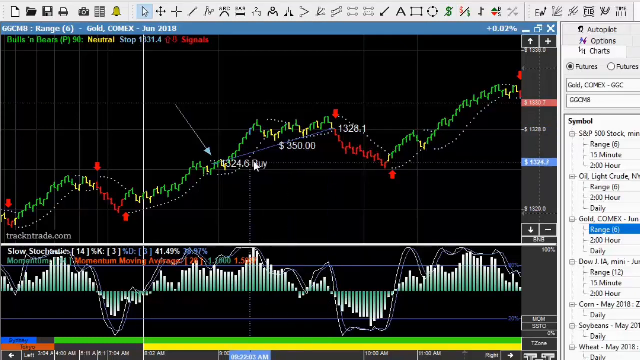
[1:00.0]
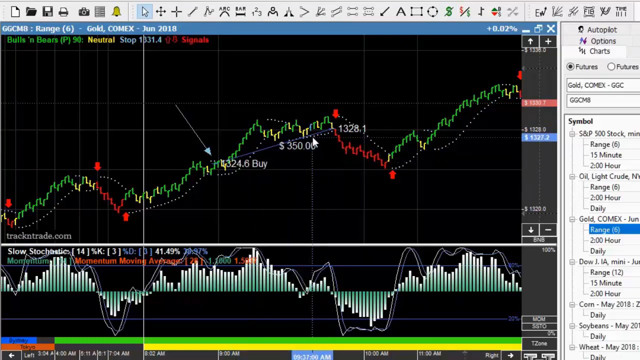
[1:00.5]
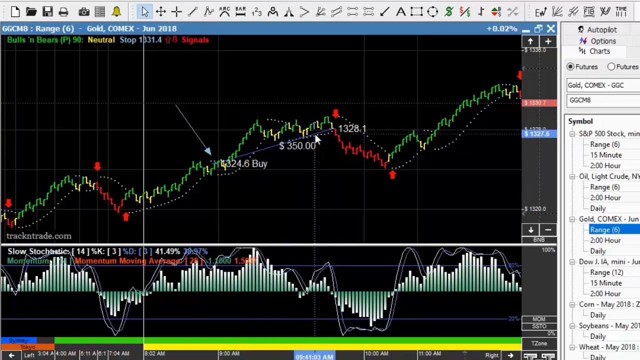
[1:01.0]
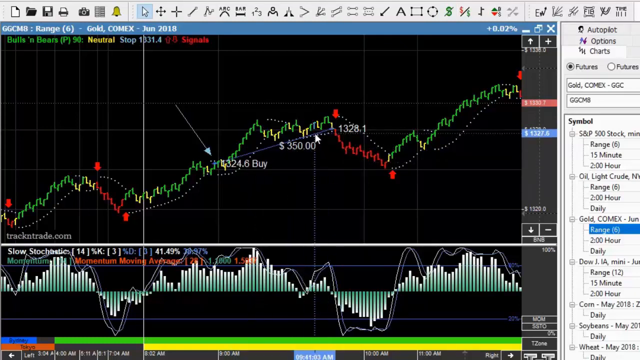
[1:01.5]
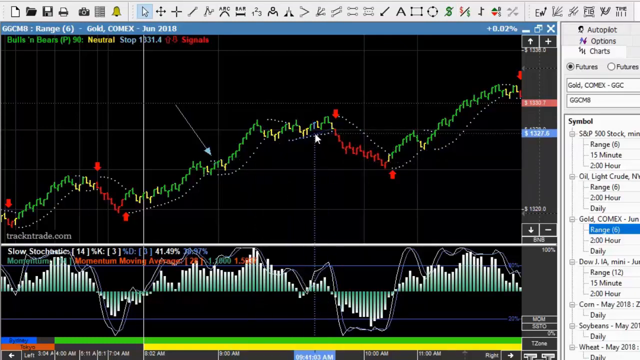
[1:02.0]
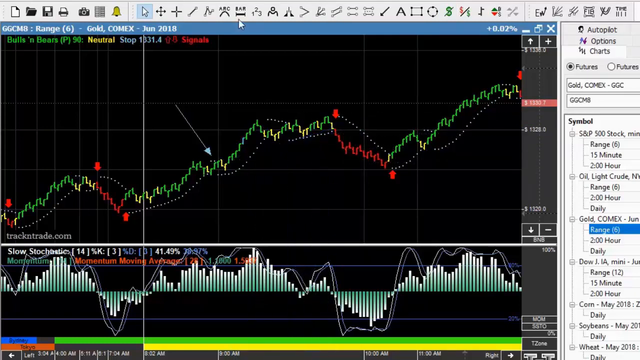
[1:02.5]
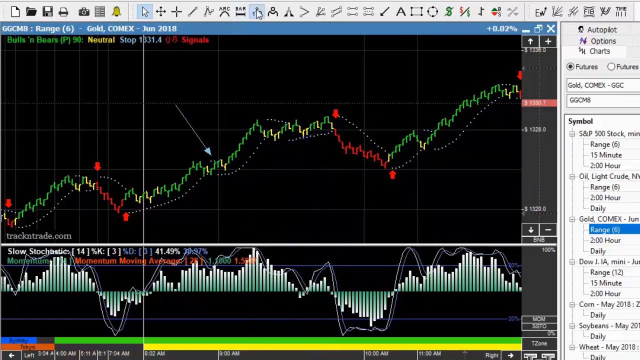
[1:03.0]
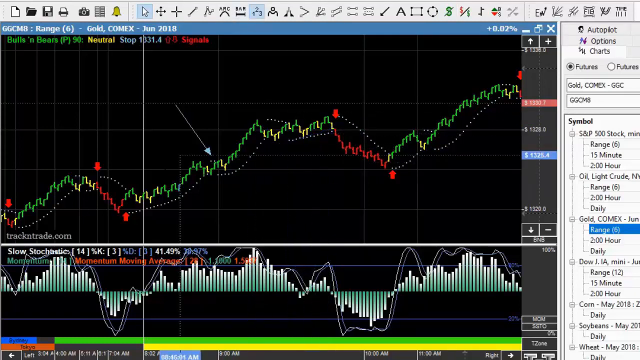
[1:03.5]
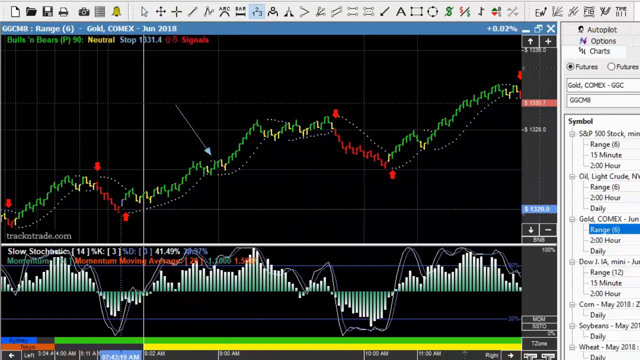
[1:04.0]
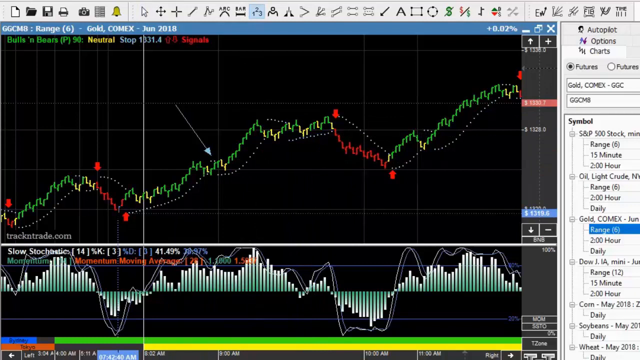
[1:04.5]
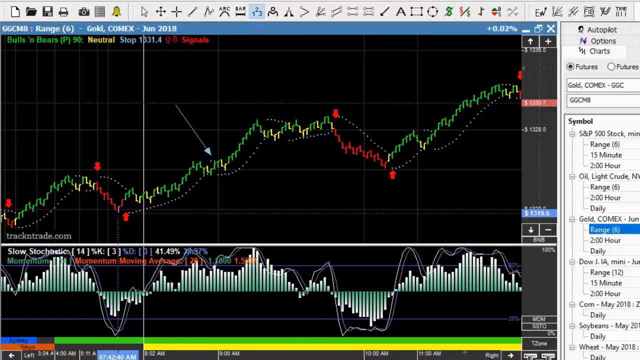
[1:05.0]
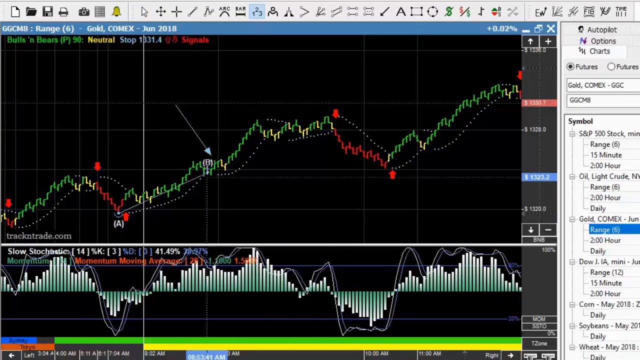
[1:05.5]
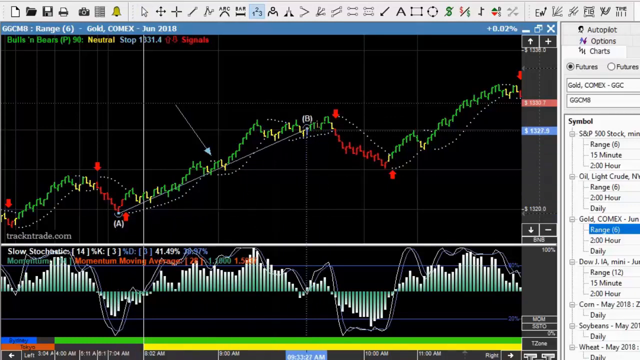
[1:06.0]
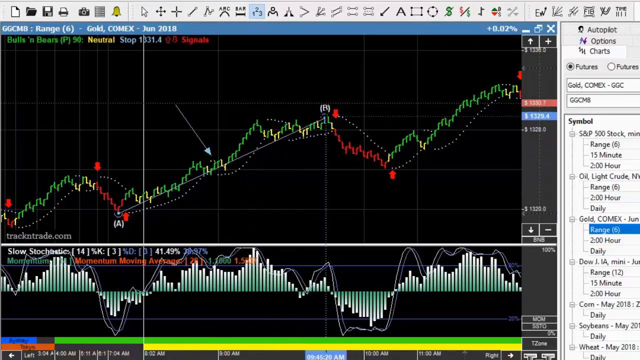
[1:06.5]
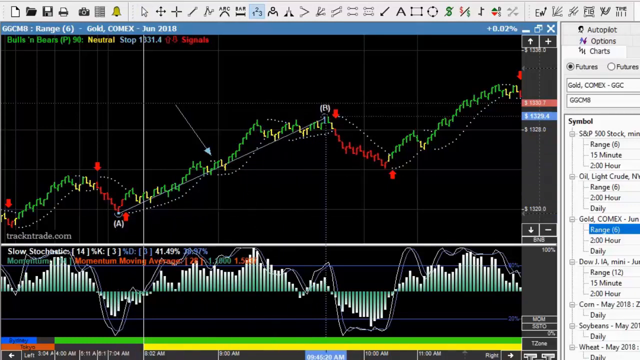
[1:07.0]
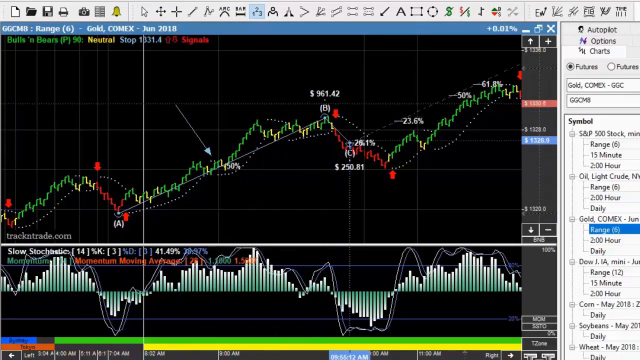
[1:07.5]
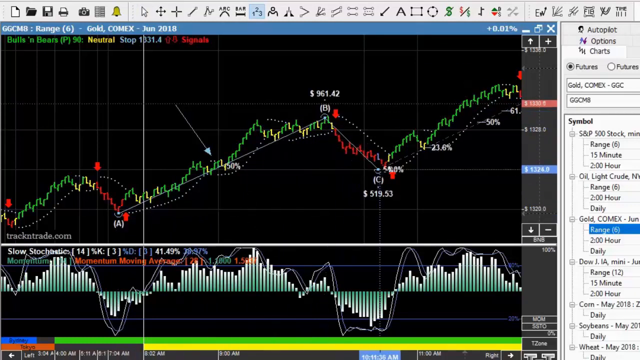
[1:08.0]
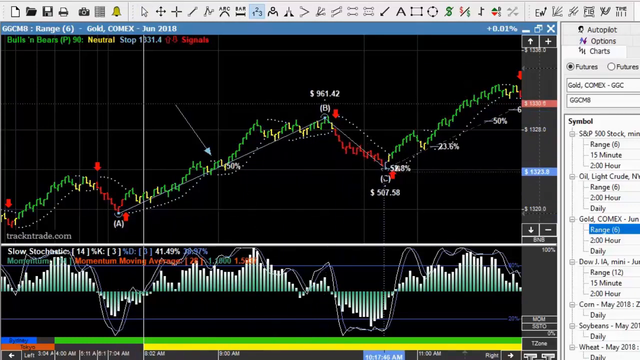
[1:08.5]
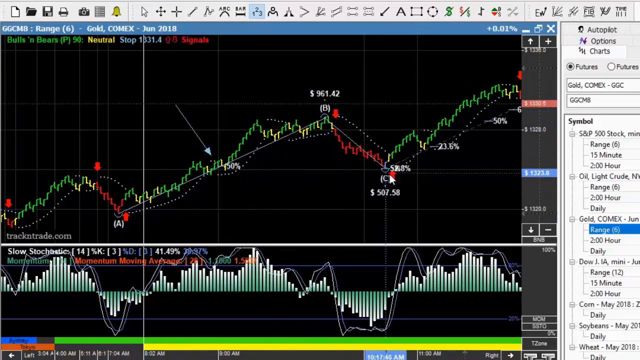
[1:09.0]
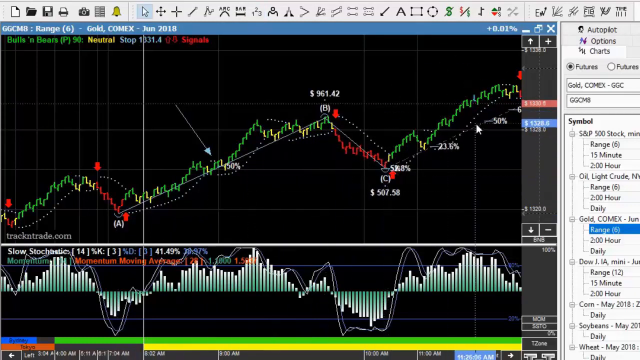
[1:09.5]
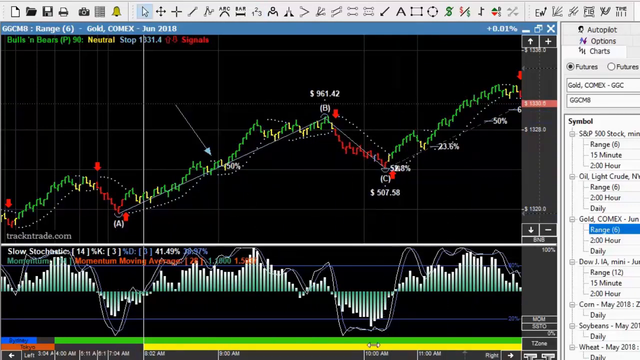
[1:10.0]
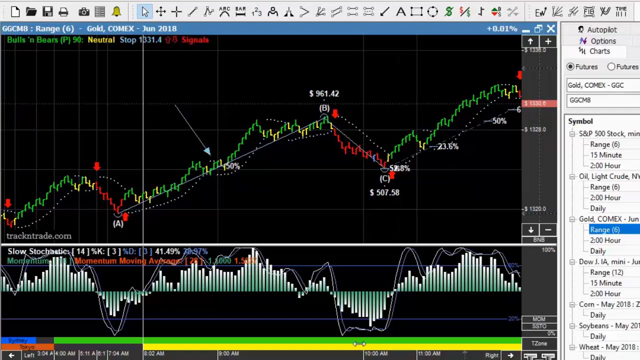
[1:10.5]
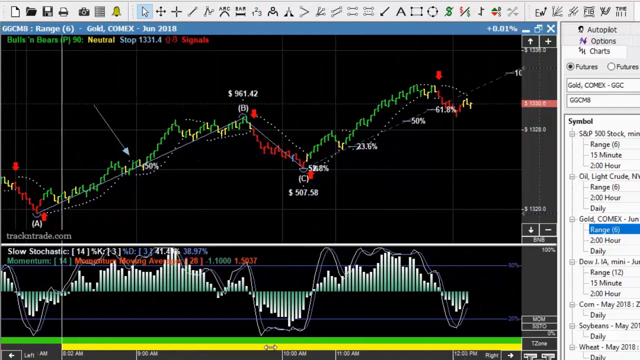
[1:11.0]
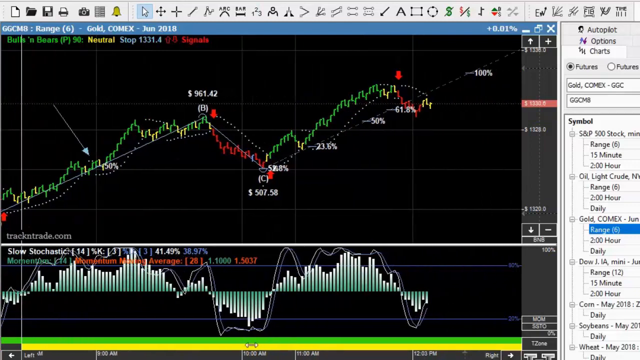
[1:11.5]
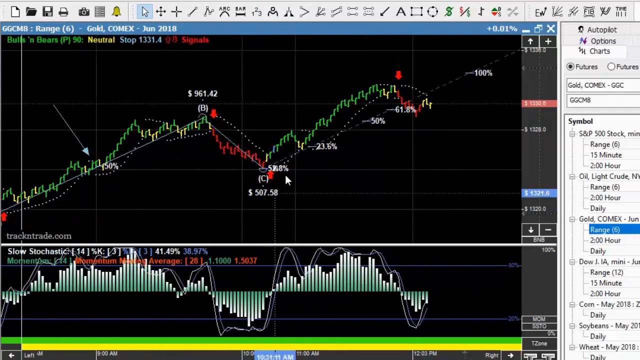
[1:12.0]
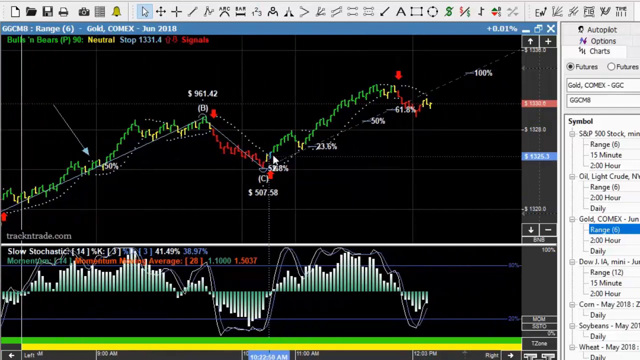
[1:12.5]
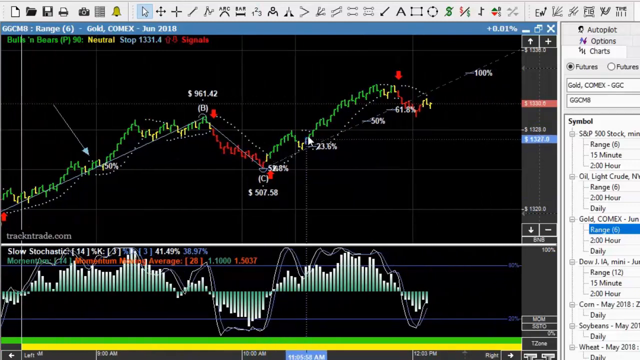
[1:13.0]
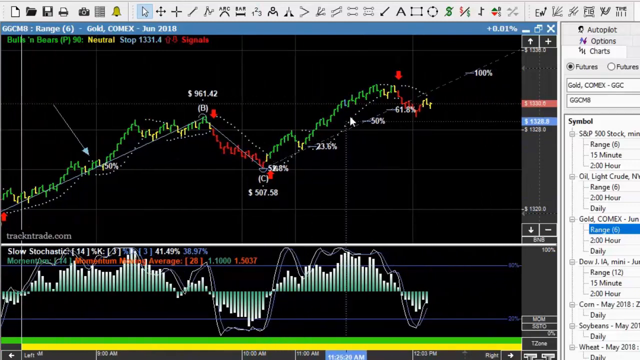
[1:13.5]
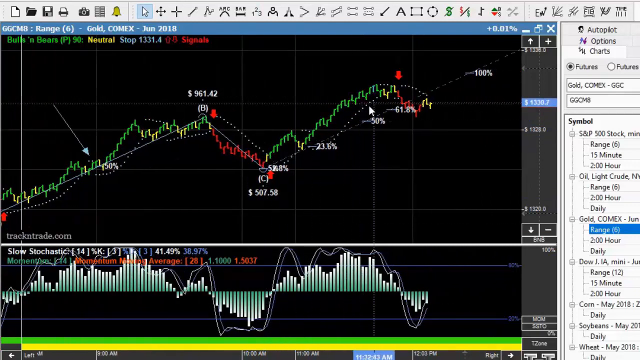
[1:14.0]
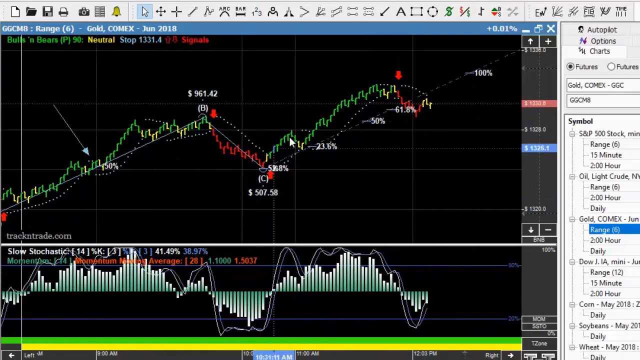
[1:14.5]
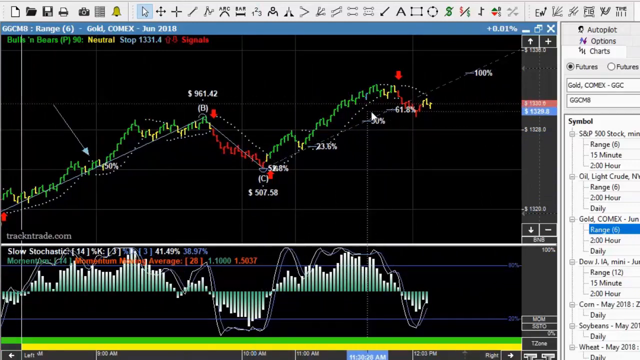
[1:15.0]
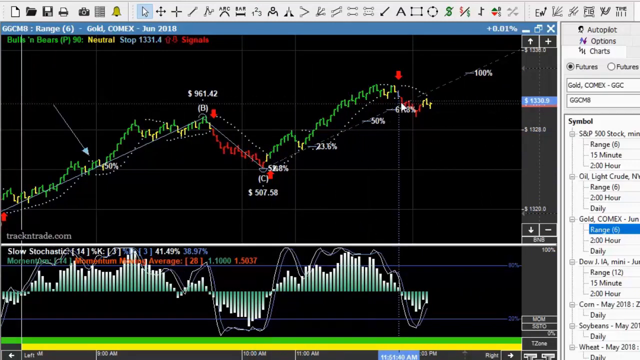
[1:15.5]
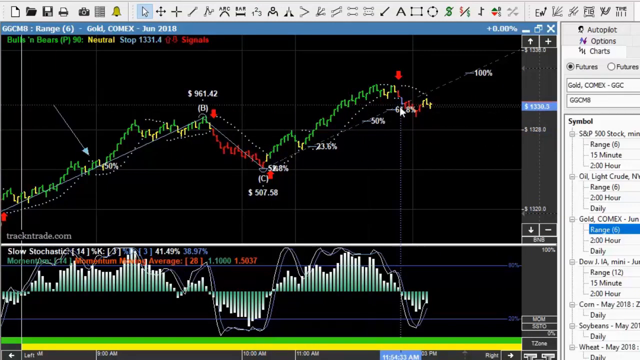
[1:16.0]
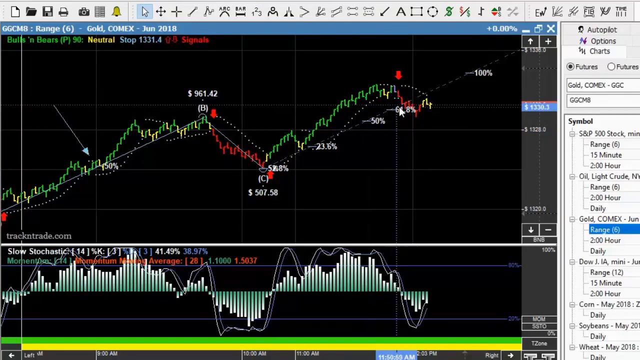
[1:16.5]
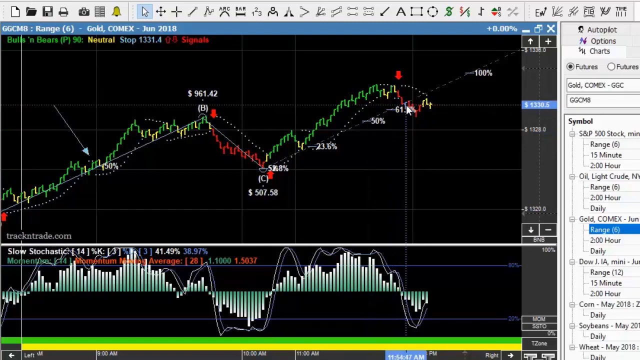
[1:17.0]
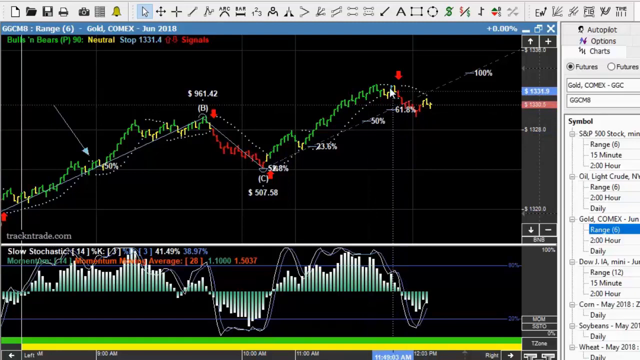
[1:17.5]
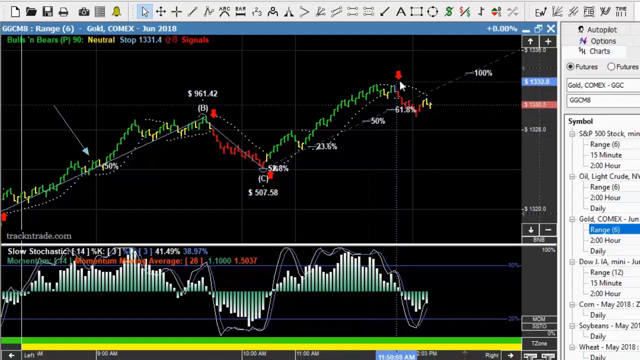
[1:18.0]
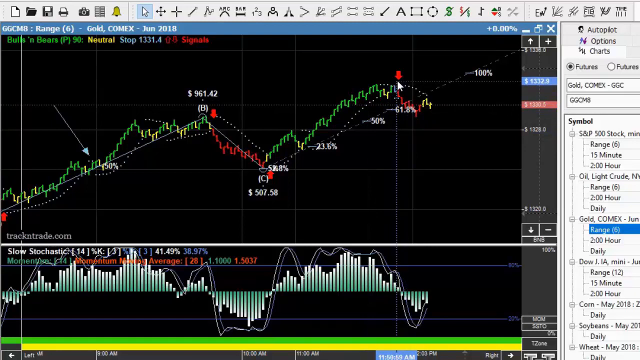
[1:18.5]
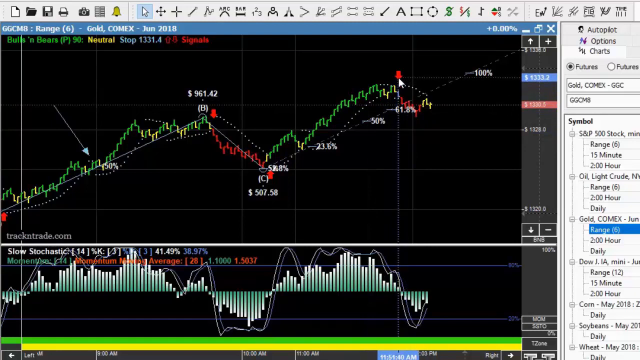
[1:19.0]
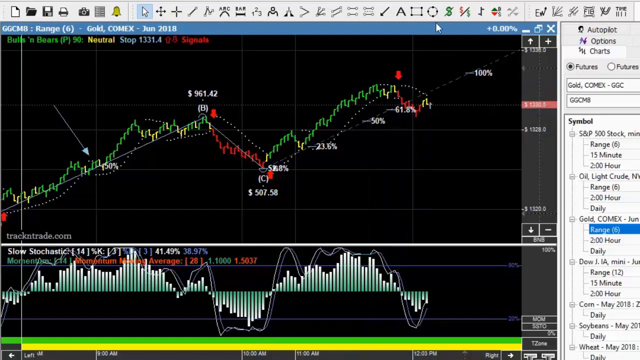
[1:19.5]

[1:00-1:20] A black screen shows a graph of changes over time that runs from the lower left to the top right in green, yellow and red. The mouse cursor follows along a drawn line that shows different numbers, moving beside it until the numbers disappear. The cursor then goes to a toolbar at the very top and clicks an icon labeled "1, 2, 3". It starts drawing an A to B point along the middle of the graph, then draws a B to C point further down and to the right. The screen moves as the mouse follows toward the top edge of the graph, going back and forth along that edge before moving up to the very top, where a dollar sign icon is visible in the toolbar.